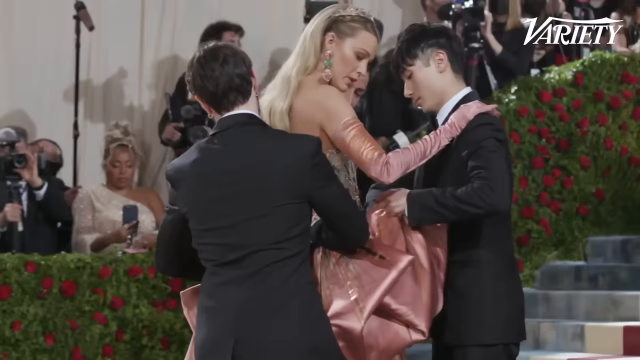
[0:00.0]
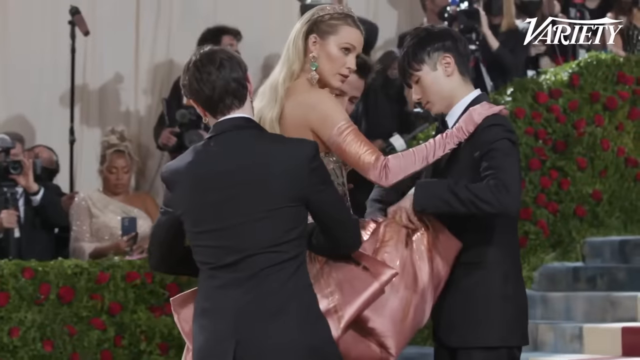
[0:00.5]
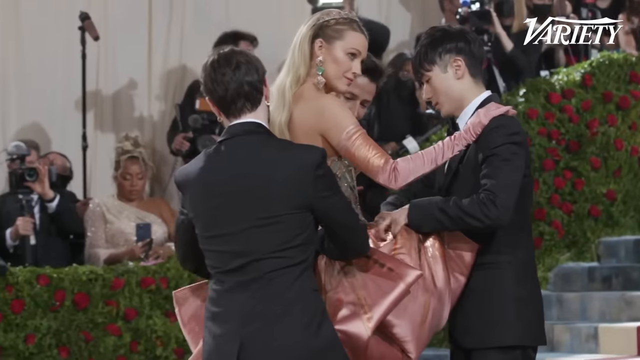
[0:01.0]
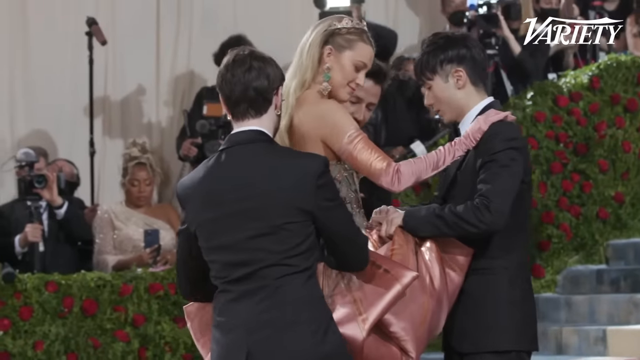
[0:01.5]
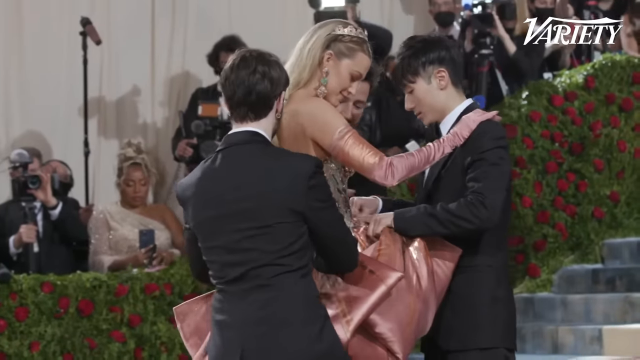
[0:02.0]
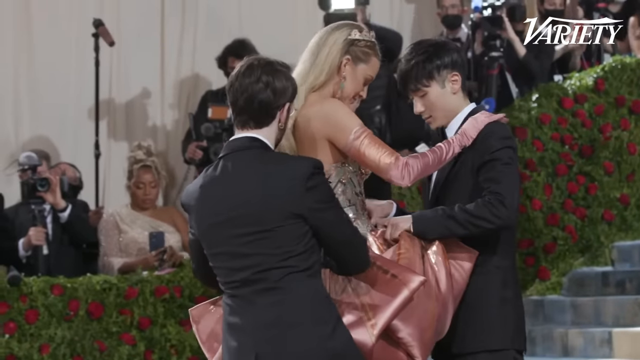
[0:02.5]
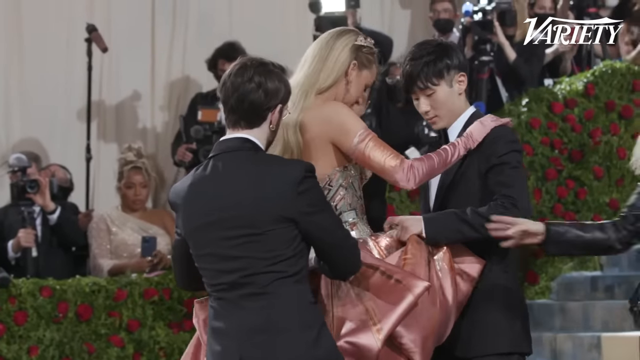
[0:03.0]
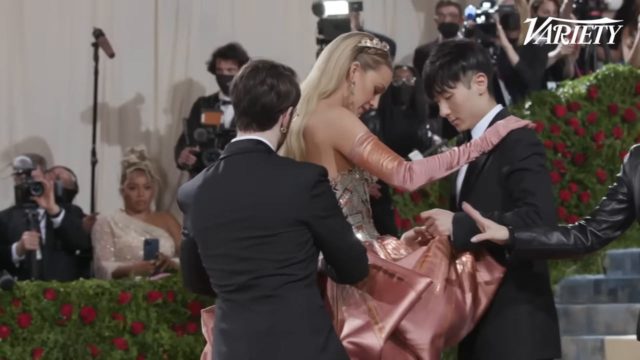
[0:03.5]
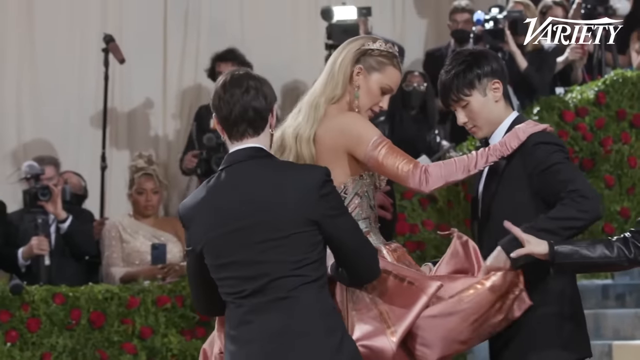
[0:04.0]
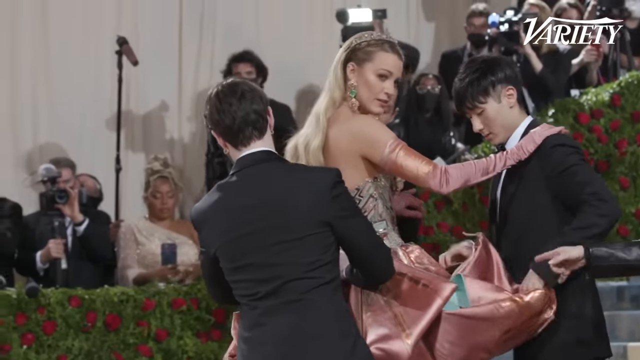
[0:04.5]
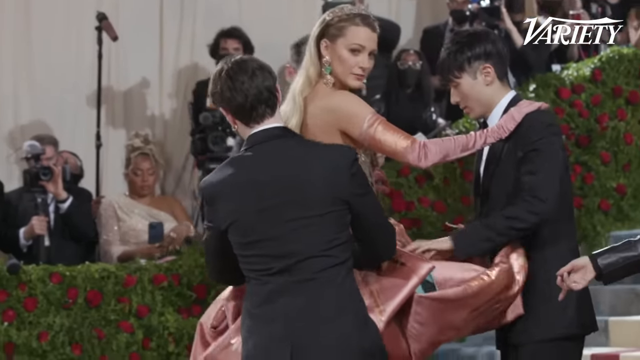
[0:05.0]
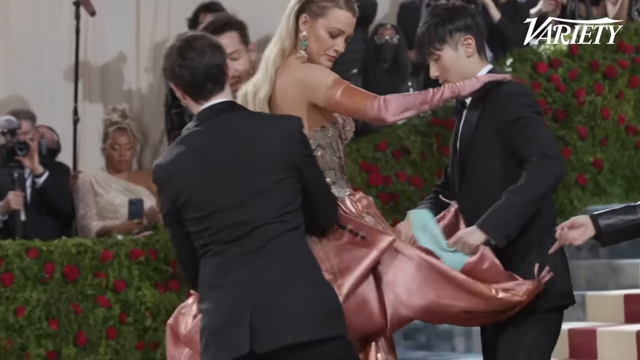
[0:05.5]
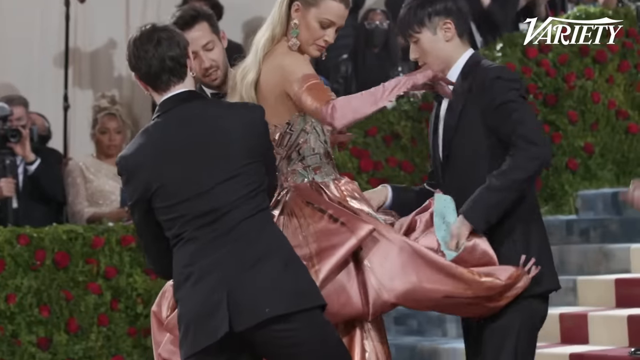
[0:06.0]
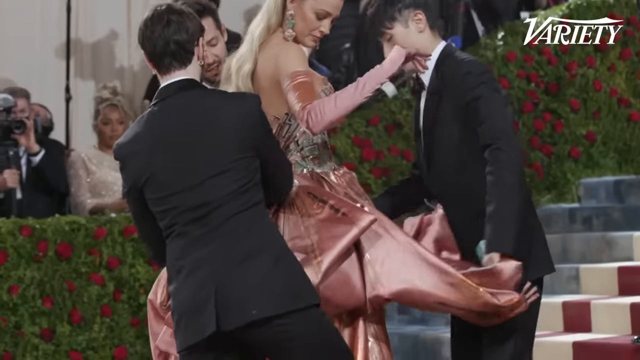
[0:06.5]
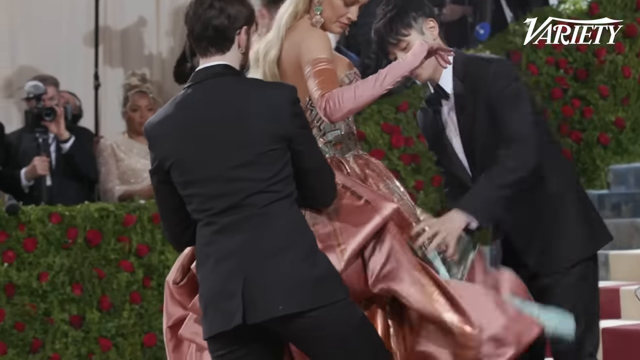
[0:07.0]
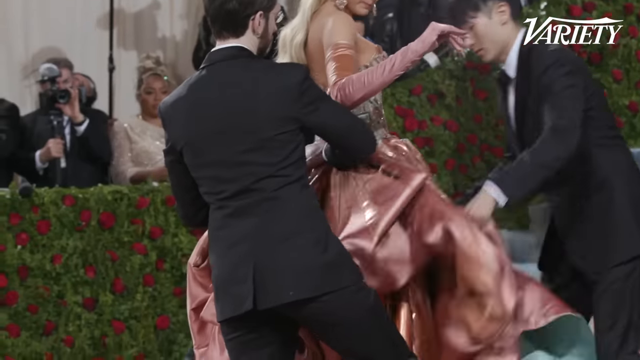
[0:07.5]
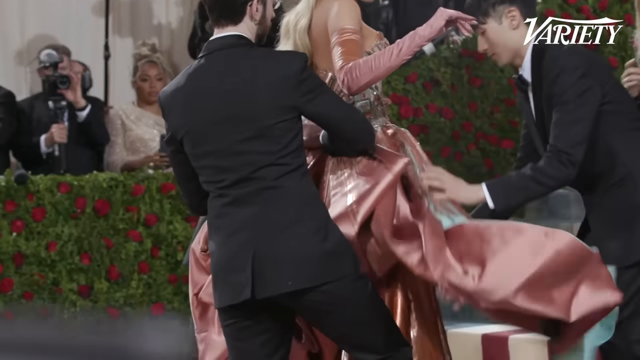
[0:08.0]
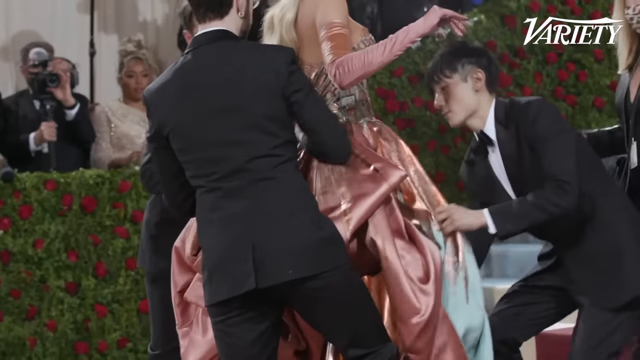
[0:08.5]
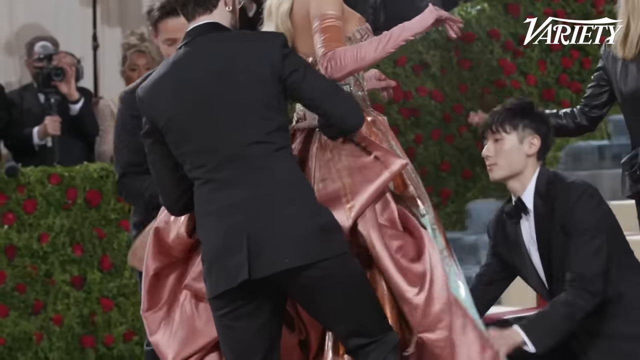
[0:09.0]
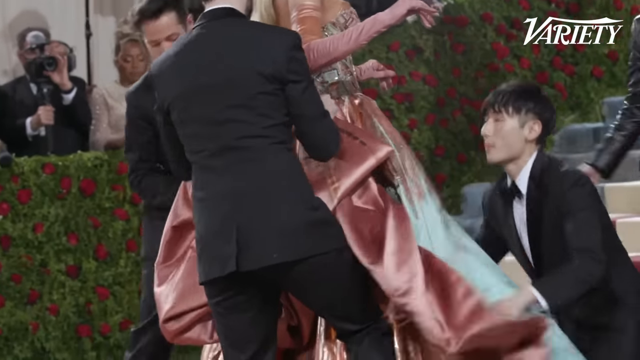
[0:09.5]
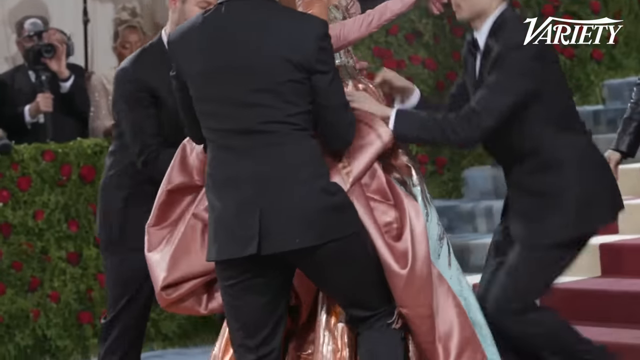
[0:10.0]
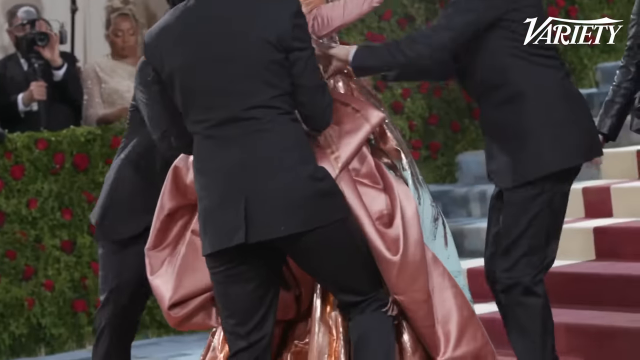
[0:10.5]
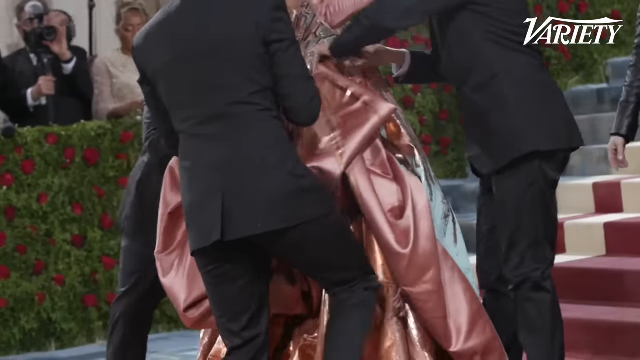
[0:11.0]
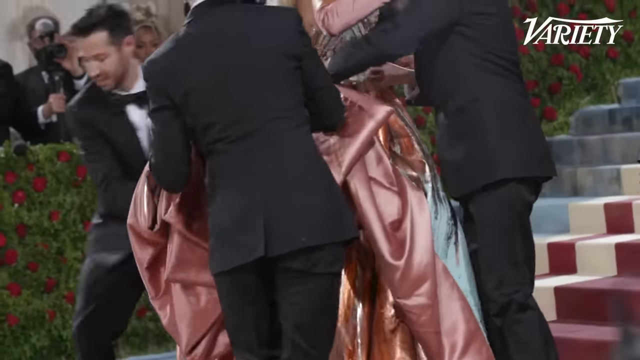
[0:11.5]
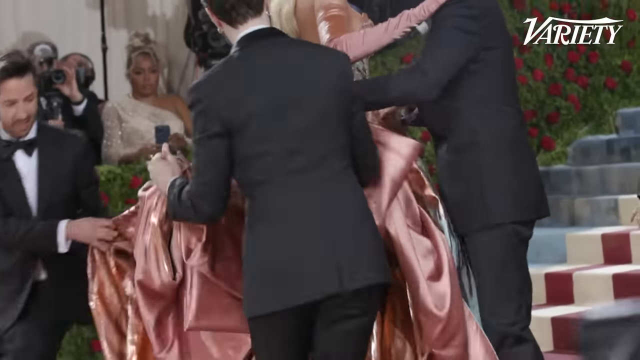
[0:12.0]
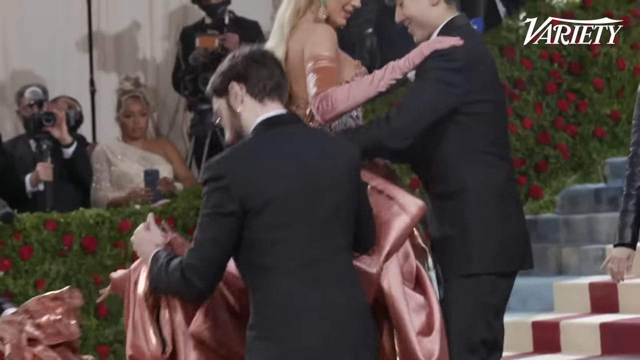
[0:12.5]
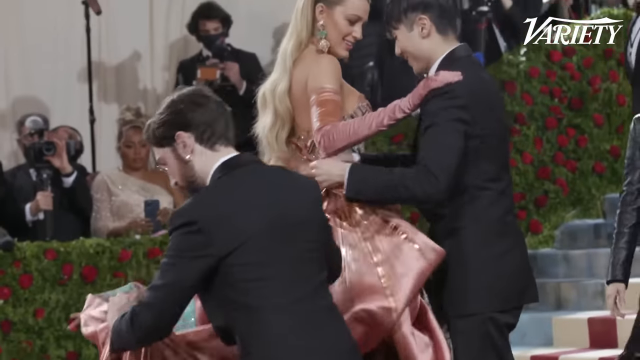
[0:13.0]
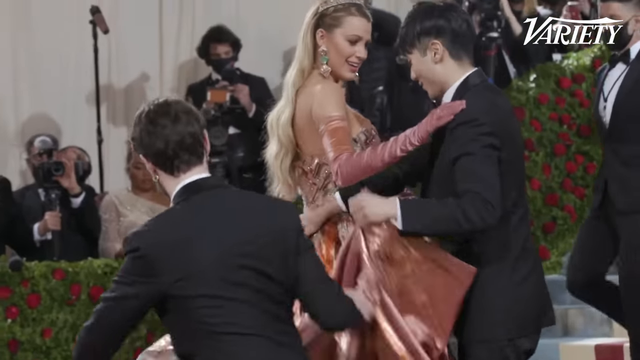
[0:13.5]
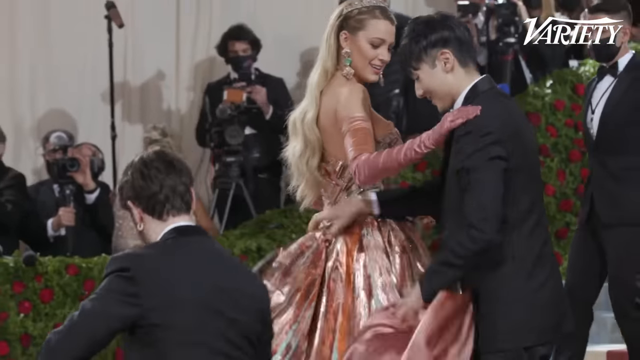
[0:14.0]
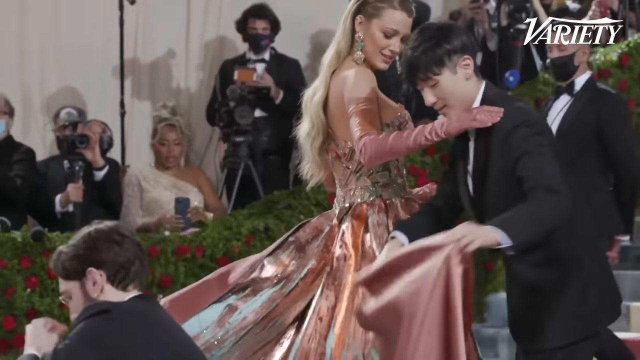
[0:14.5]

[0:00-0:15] The video, titled Blake Lively Met Gala Dress Reveal, opens on an image of the actress Blake Lively wearing a gown; she appears to be standing outside the Met Gala. The Variety magazine logo is in the upper right-hand corner. Green bushes line a staircase filled with red roses, and paparazzi and photographers in the background aim their cameras at her to take pictures. Two men are helping her, appearing to unfurl her dress: the bottom of the skirt was pinned up, and they unpin it and take it down. She wears long pink gloves, a tiara in her hair and long earrings. The men are dressed in suits with bow ties. She is at the bottom of the staircase, her right hand holding onto the shoulder of an Asian man who is unpinning and unfurling the long pinkish-red skirt of her gown. She is seen in side profile, with the men standing outside.